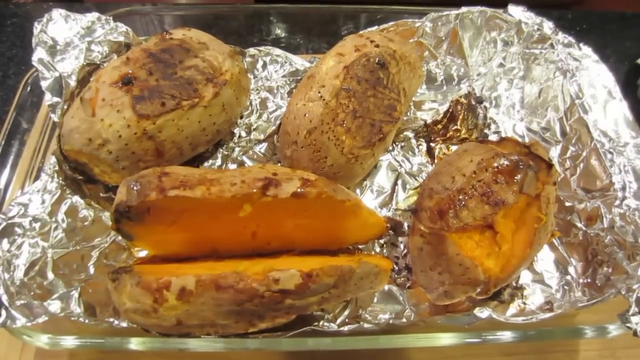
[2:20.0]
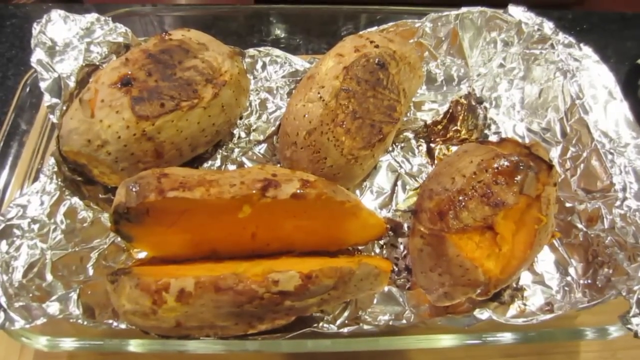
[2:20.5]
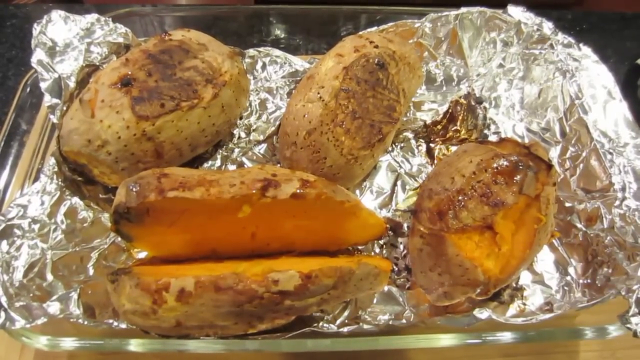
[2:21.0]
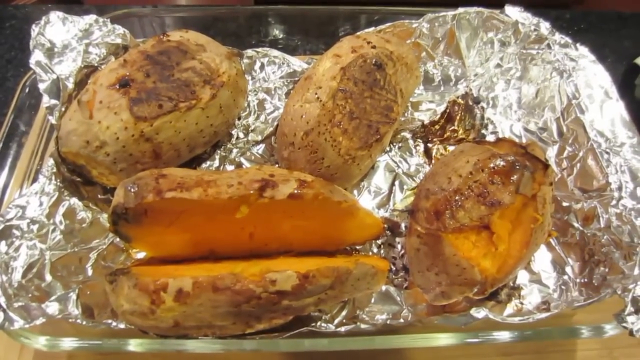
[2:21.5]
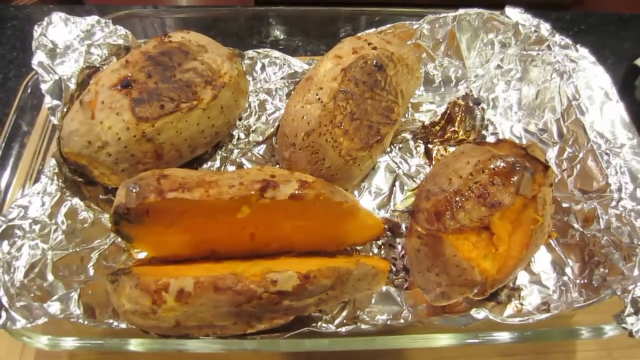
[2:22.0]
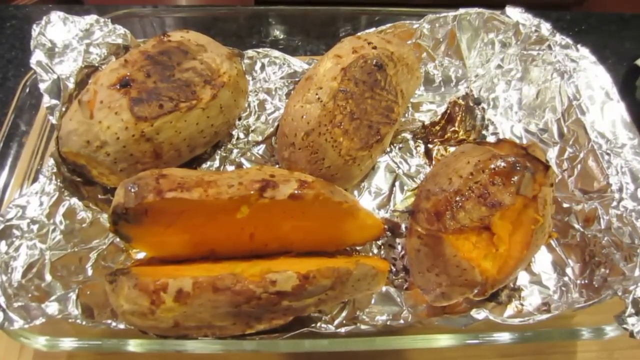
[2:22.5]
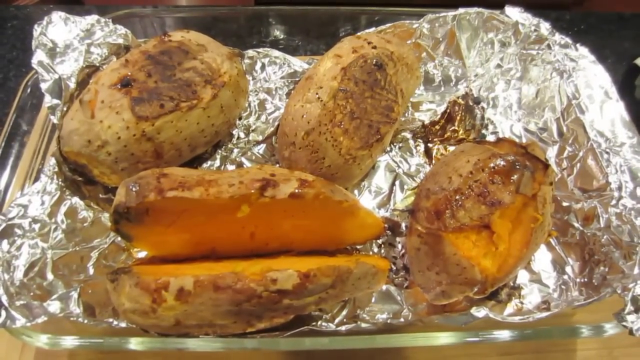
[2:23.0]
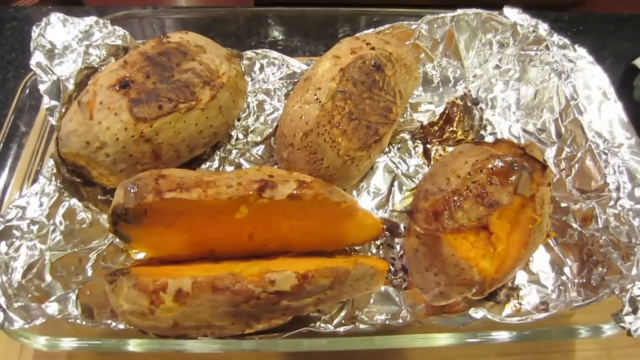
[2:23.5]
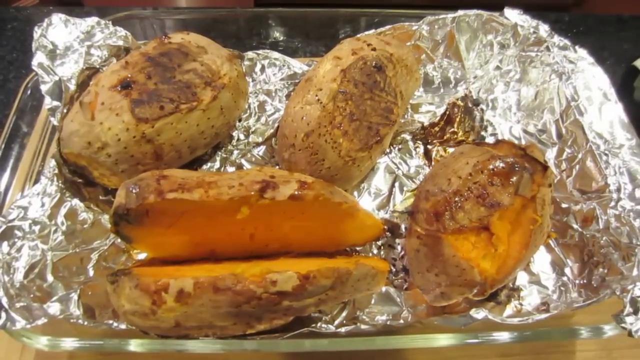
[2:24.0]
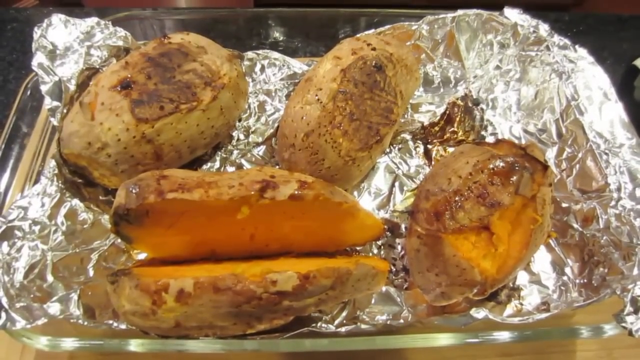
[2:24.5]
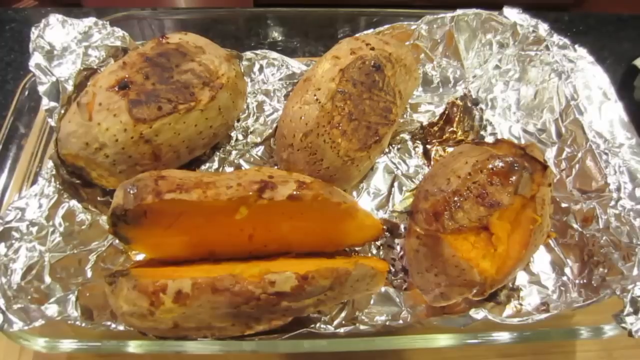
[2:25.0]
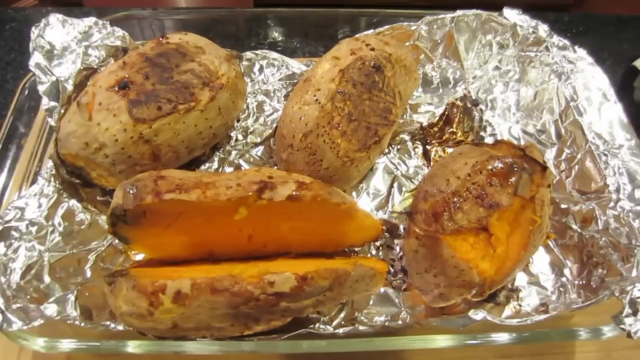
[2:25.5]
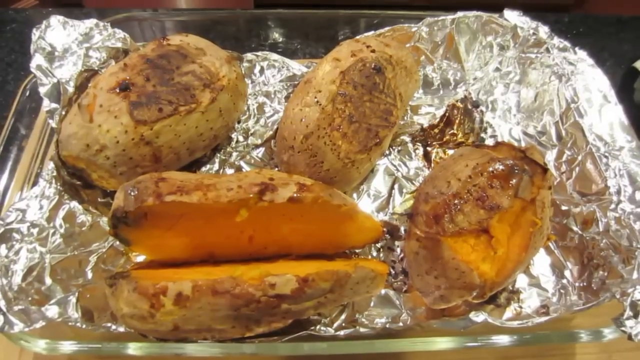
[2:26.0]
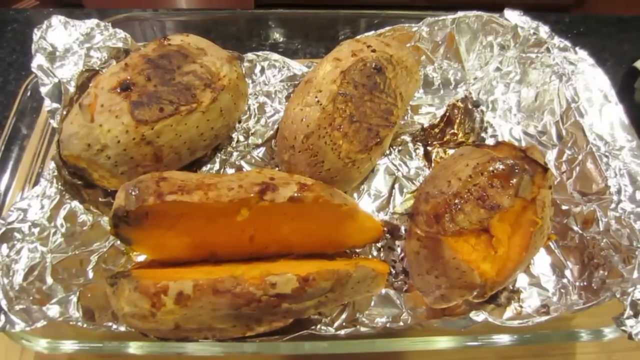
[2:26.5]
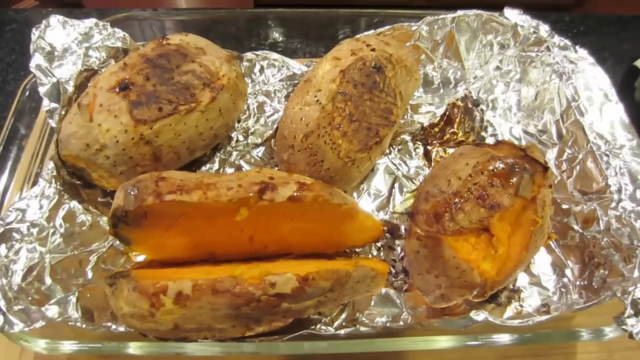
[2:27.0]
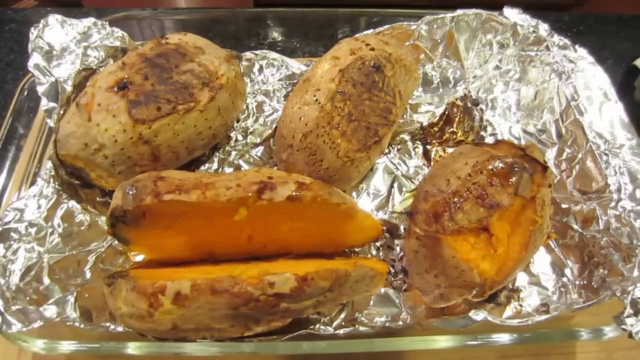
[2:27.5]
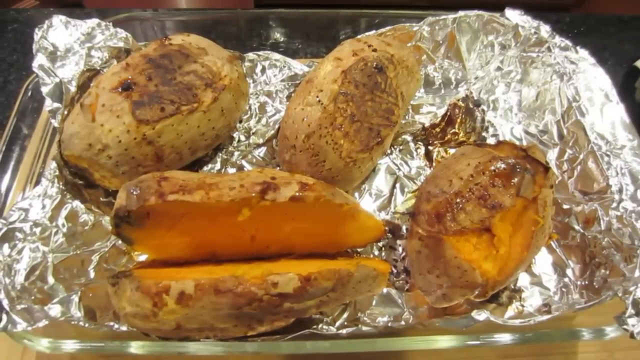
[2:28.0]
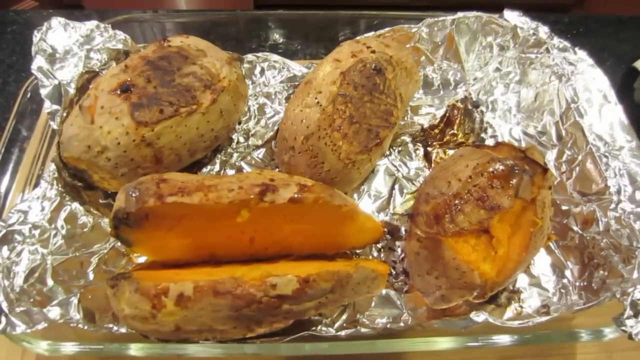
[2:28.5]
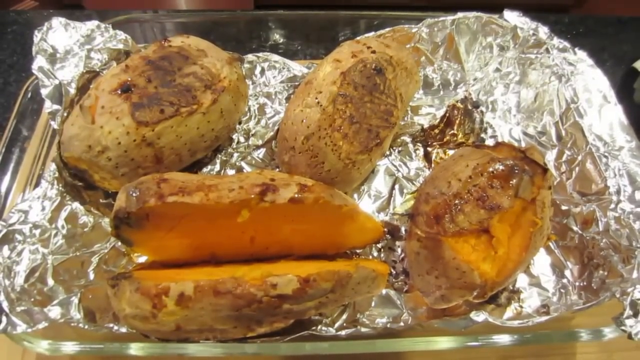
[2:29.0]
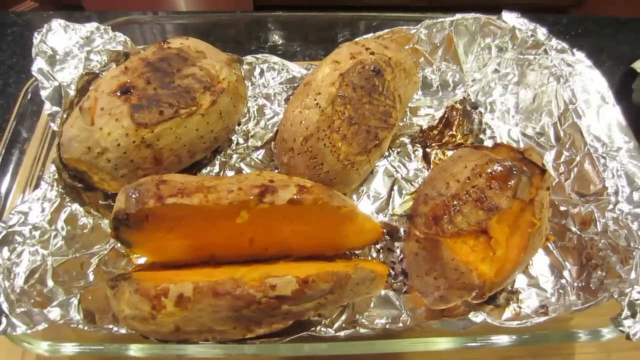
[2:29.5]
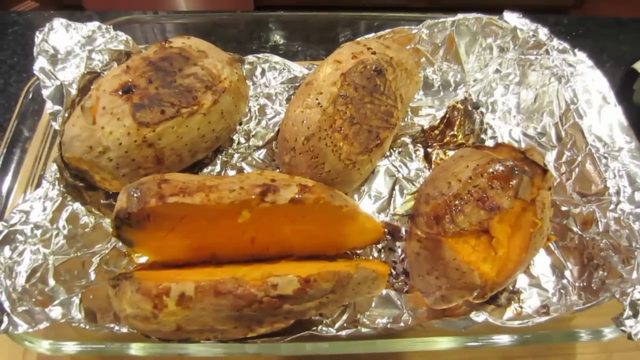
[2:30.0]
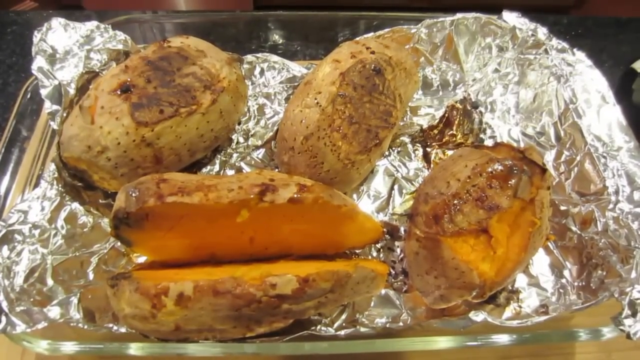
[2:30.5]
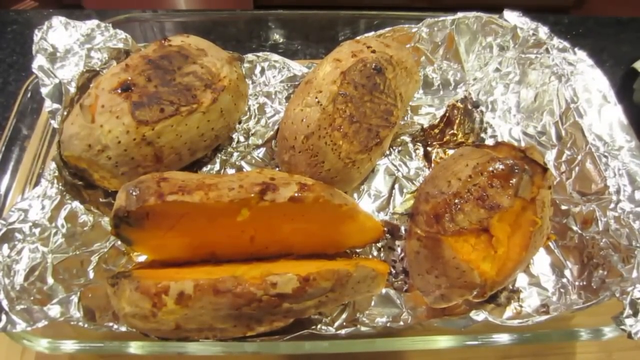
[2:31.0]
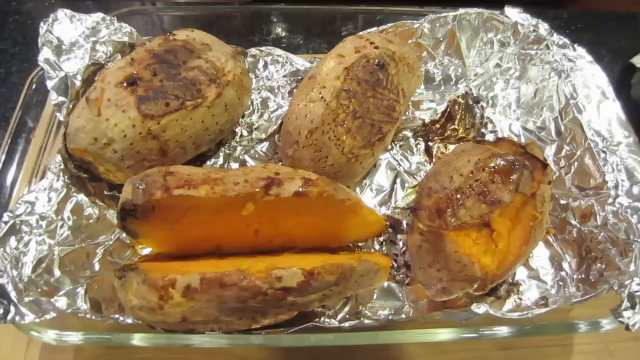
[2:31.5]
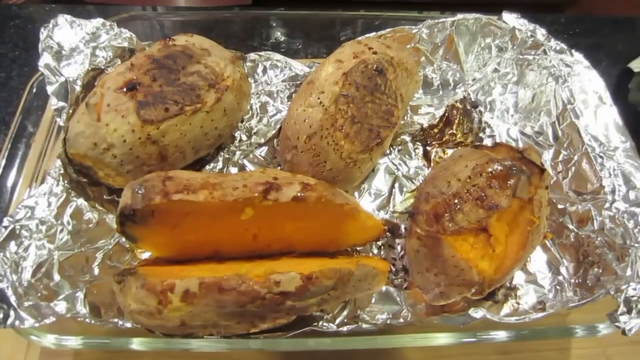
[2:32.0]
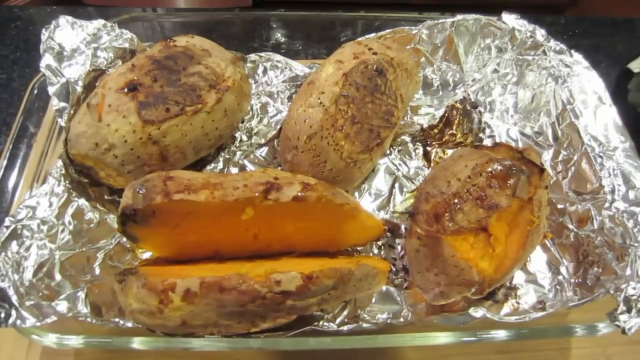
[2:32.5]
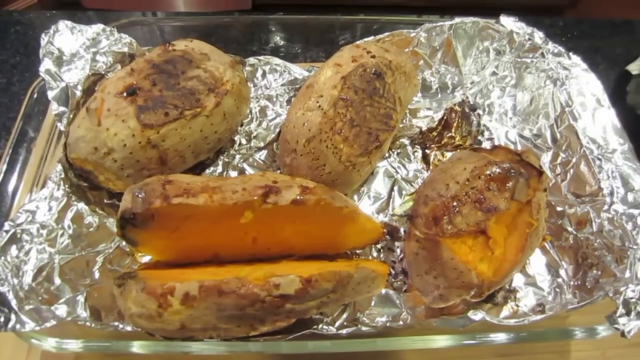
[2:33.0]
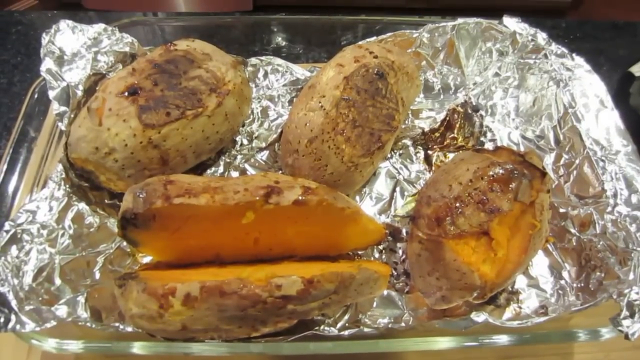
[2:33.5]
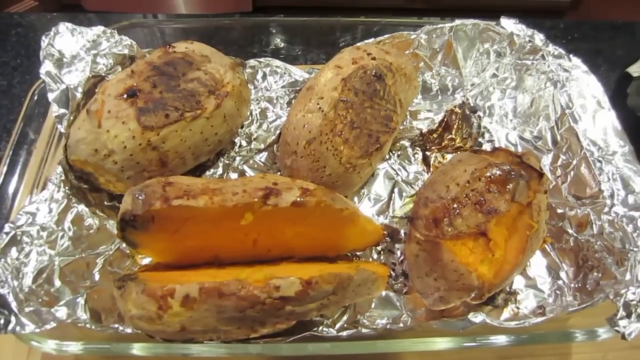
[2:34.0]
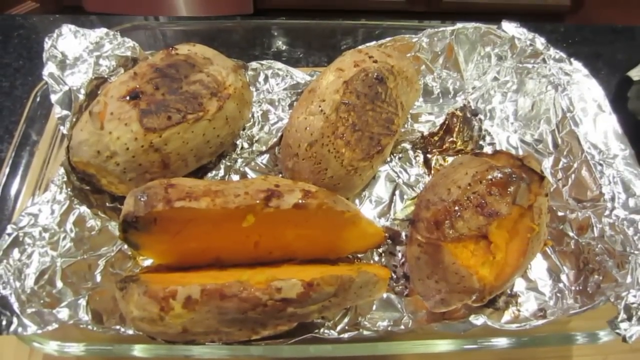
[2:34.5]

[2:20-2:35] Four baked sweet potatoes are arranged closely together on a crumpled sheet of aluminum foil inside a deep, glass, rectangular baking pan. The sweet potato in the foreground, on the lower left side of the dish, lies horizontally and is cut open horizontally, showing its dark orange inside. To its right is a rounder sweet potato pointed upward with its top tip slanted slightly toward the right; it is uncut, with darkened, cooked skin. Above the horizontal sweet potato are two others, also facing upward with their top tips pointed slightly toward the right edge of the frame; they are uncut and unopened, with black discoloration on their skins from baking, and covered in tiny holes that look like little fork holes. The aluminum foil is dirty and has clearly been used.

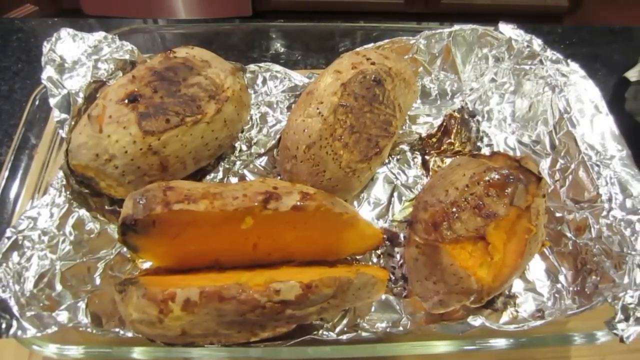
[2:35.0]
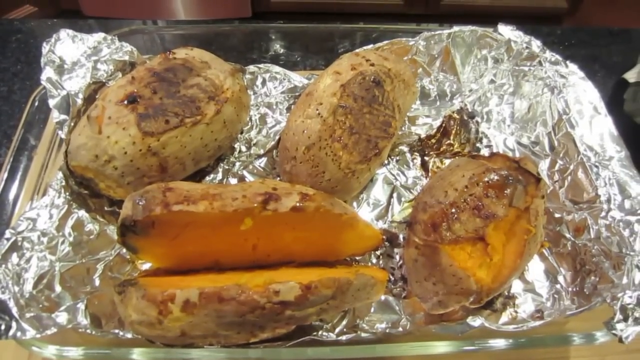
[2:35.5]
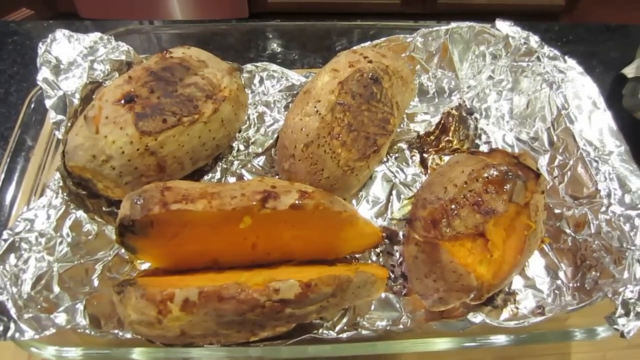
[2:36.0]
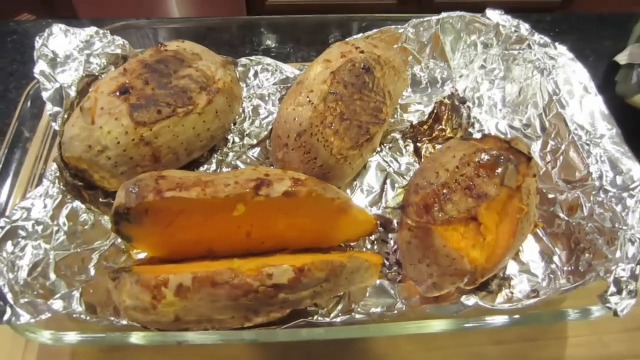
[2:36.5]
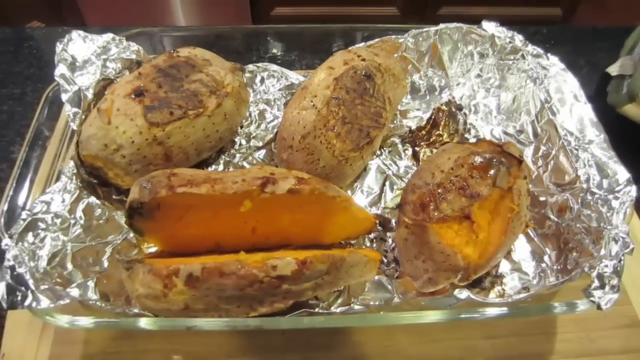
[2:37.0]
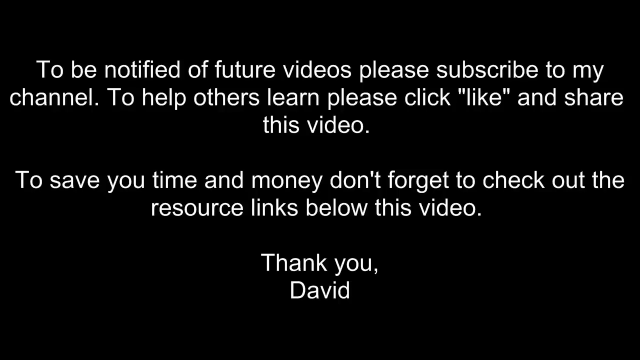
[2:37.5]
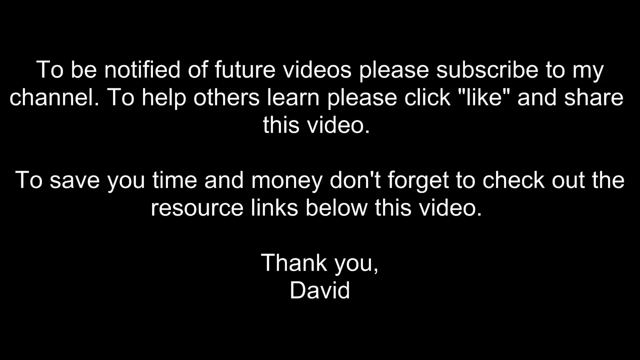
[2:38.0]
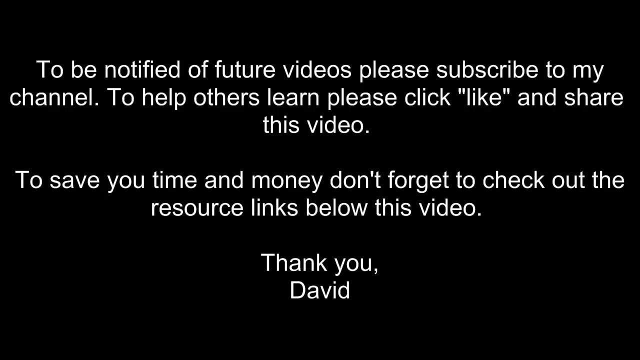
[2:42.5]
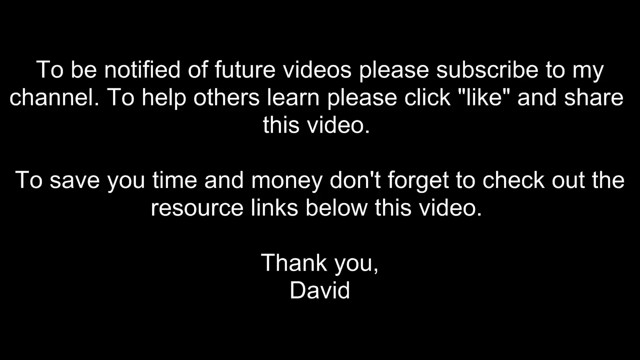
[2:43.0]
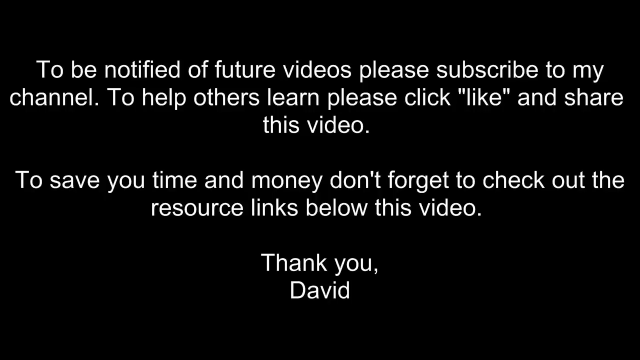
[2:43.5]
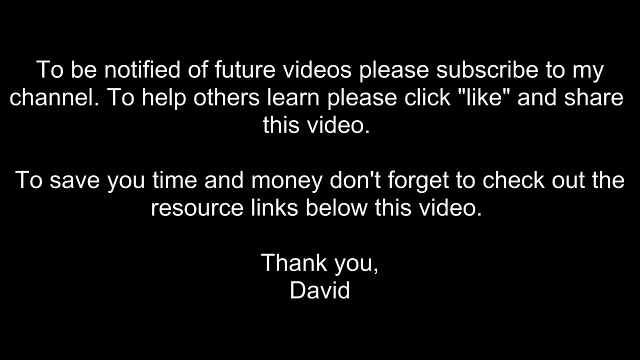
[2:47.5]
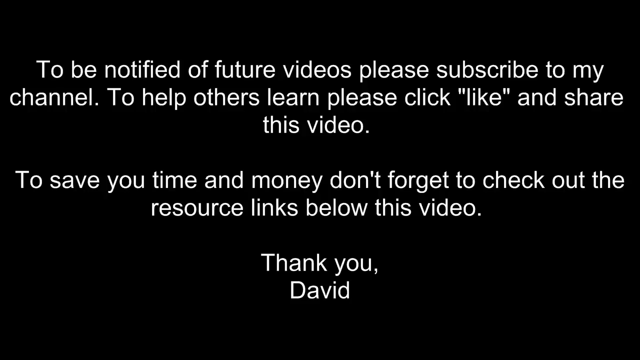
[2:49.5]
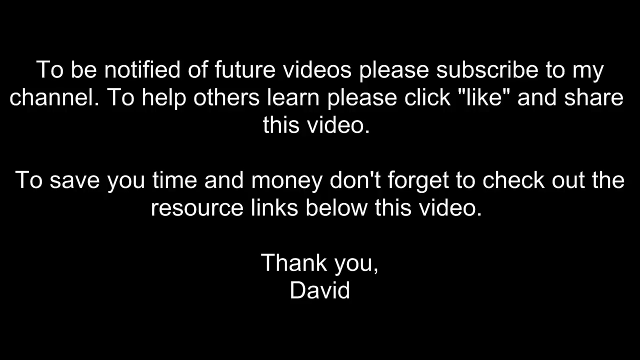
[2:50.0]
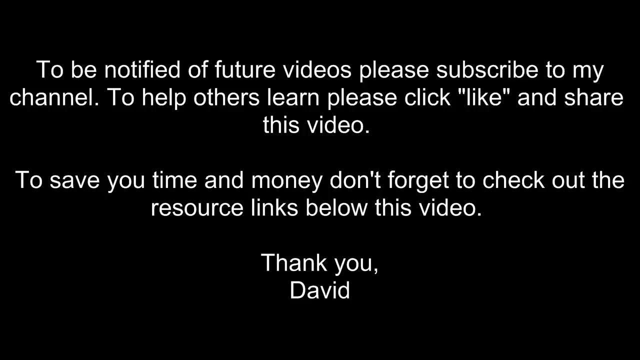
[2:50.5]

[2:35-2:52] A top-down view shows four sweet potatoes sitting very snugly together on crumpled, used aluminum foil with some black discoloration, placed inside a deep glass rectangular baking dish. One sweet potato faces horizontally in the left foreground and has been cut open. Two above it face up, turned slightly toward the right; they are unopened, with darkened skin. One other, rounder sweet potato with darkened skin is on the right side of the lower right corner of the dish. The sweet potatoes are shown for only a second before the video cuts to a black screen with white text that reads "To be notified of future videos, please subscribe to my channel. To help others learn, please click like and share this video. To save you time and money, don't forget to check out the resource links below this video. Thank you, David." The message stays on screen much longer than the sweet potatoes did, and the video ends still displaying it.